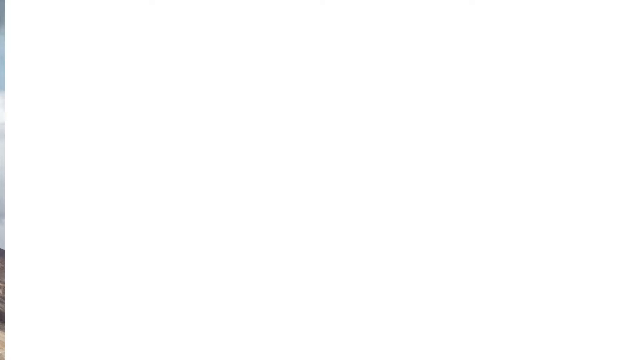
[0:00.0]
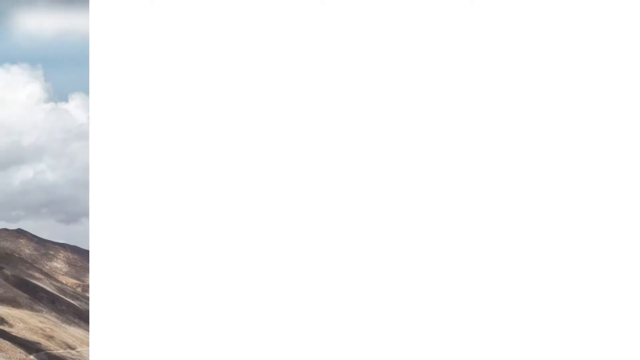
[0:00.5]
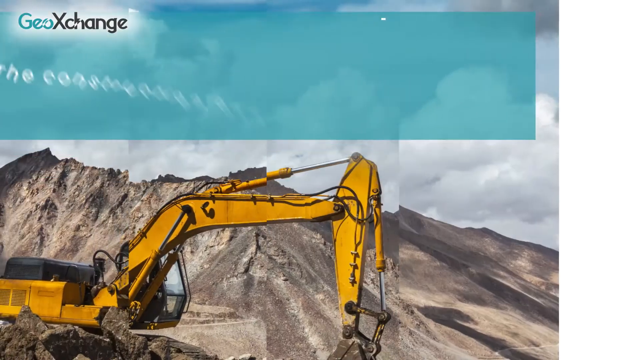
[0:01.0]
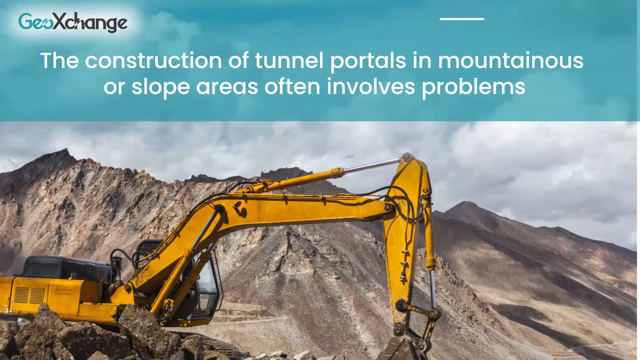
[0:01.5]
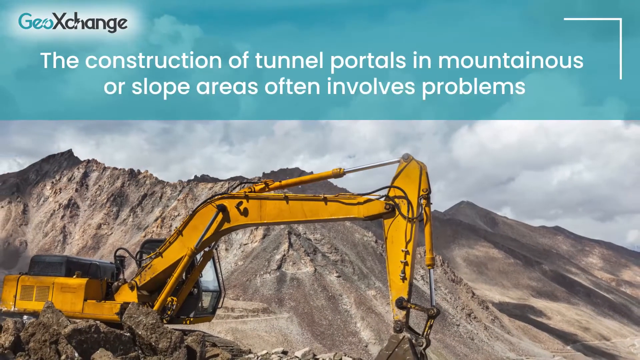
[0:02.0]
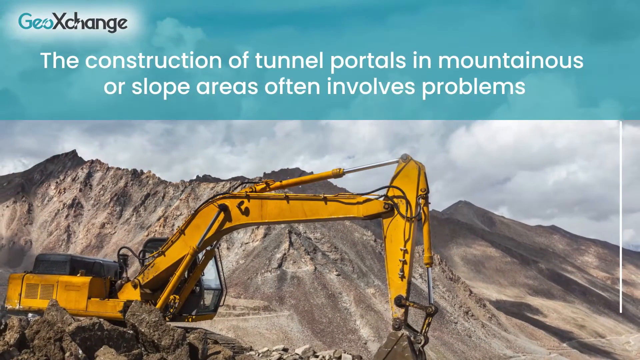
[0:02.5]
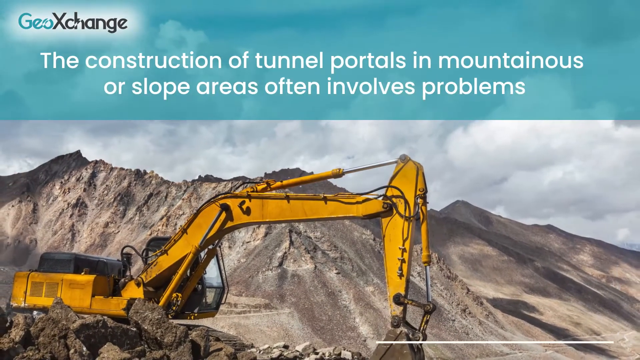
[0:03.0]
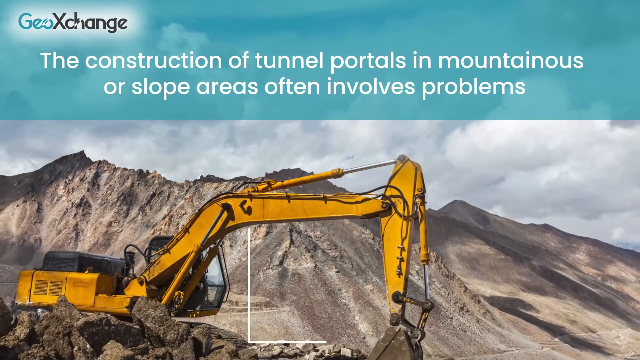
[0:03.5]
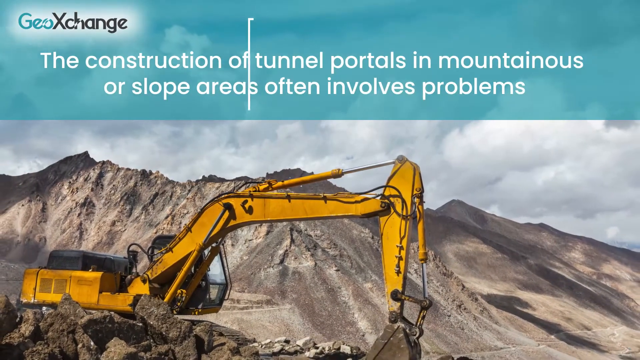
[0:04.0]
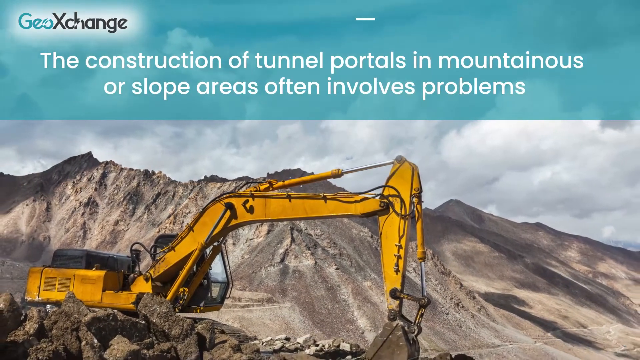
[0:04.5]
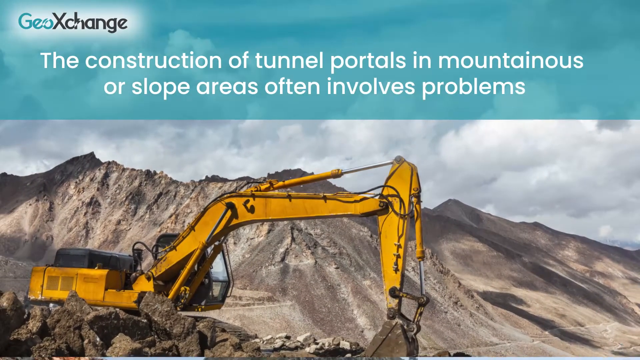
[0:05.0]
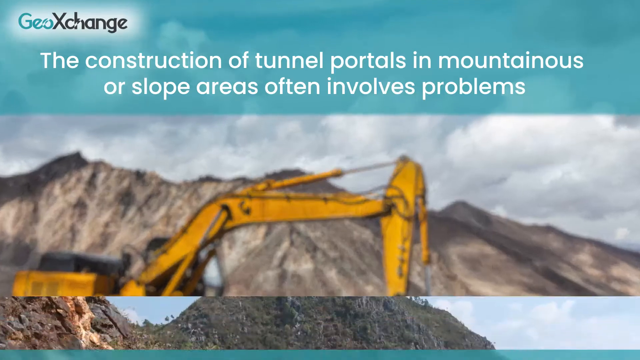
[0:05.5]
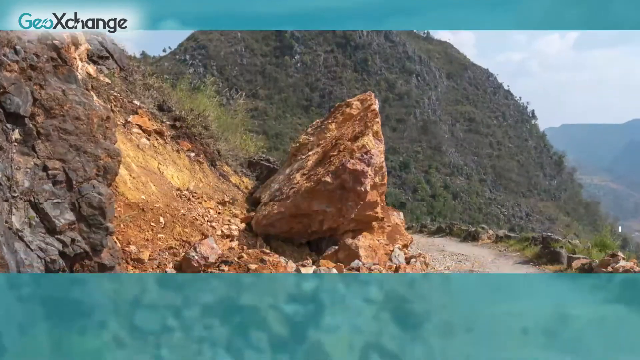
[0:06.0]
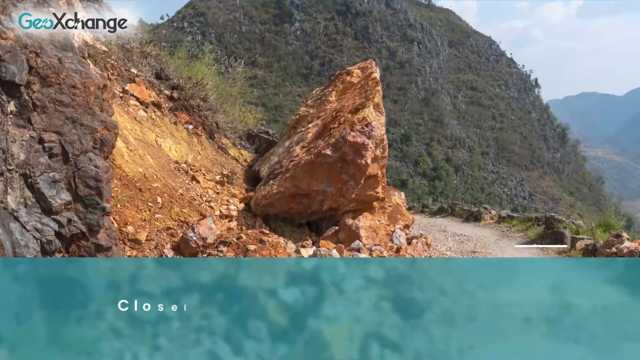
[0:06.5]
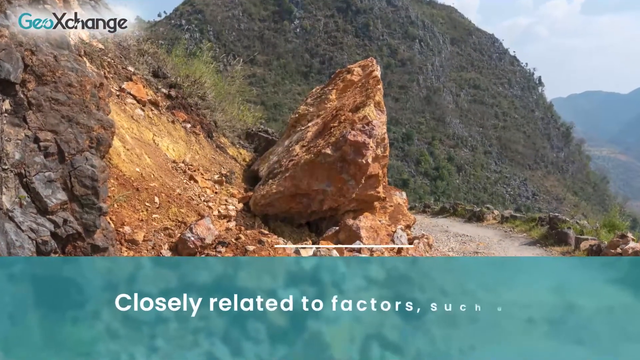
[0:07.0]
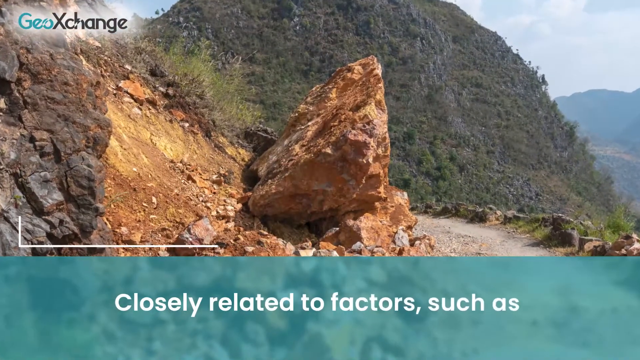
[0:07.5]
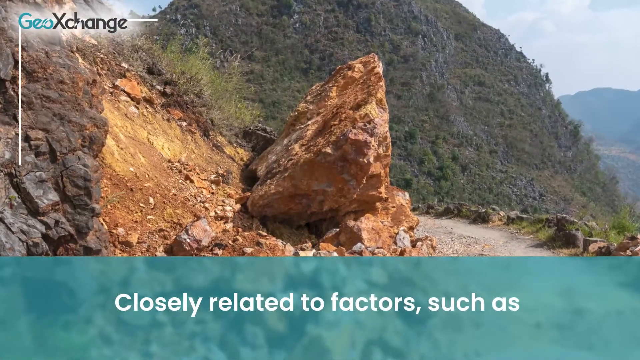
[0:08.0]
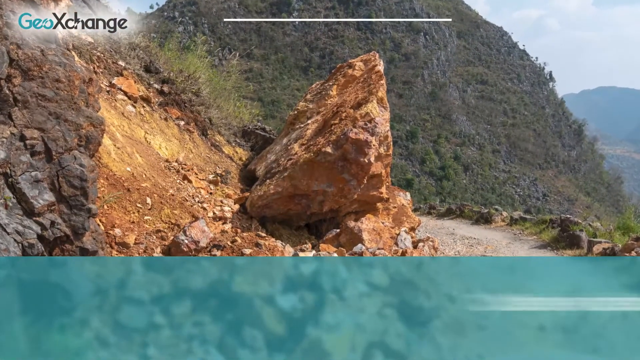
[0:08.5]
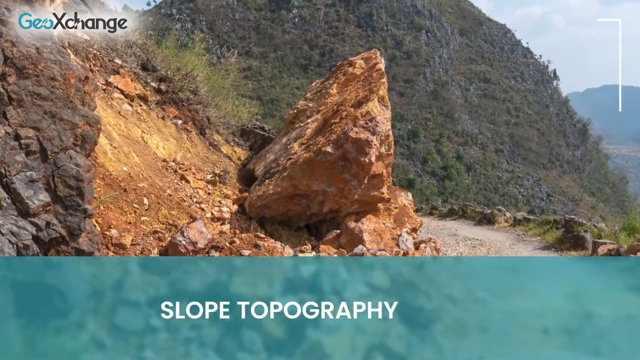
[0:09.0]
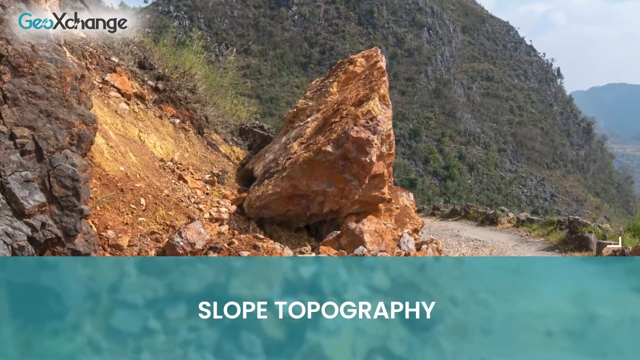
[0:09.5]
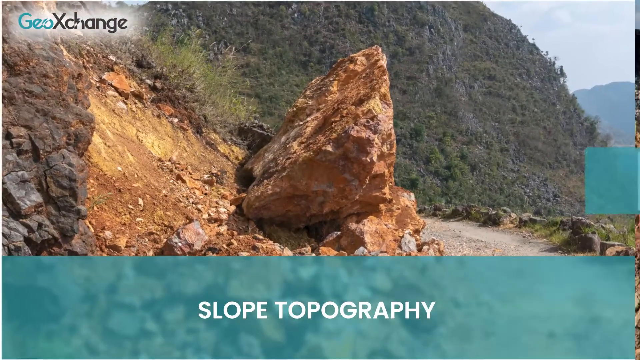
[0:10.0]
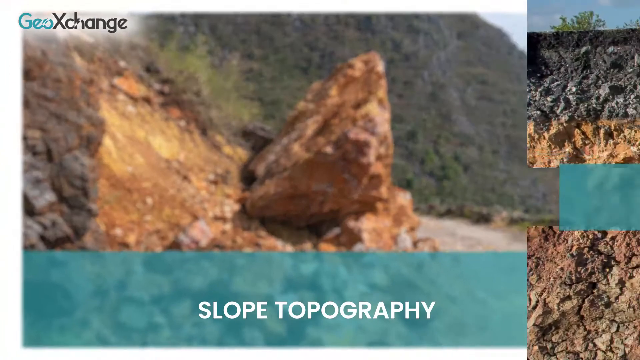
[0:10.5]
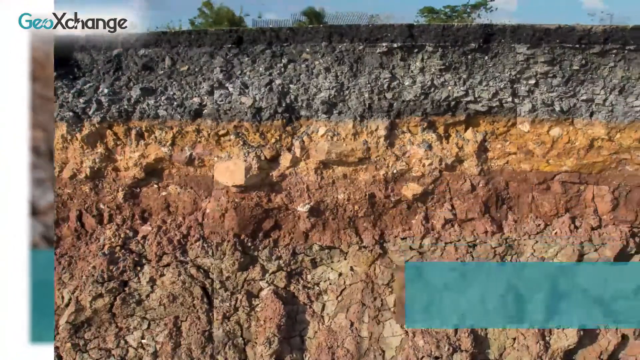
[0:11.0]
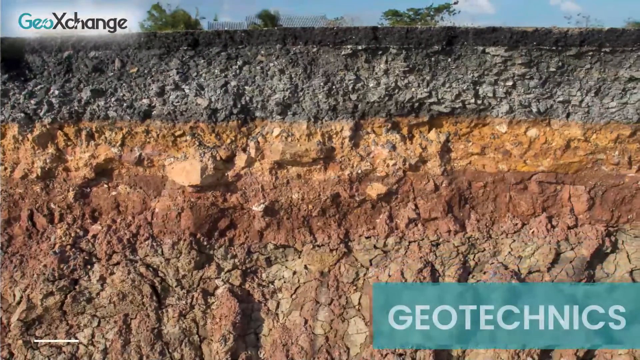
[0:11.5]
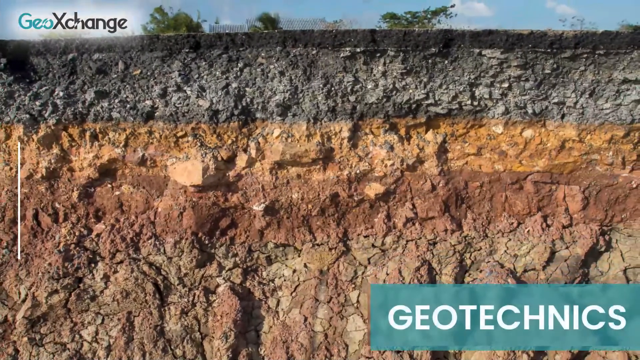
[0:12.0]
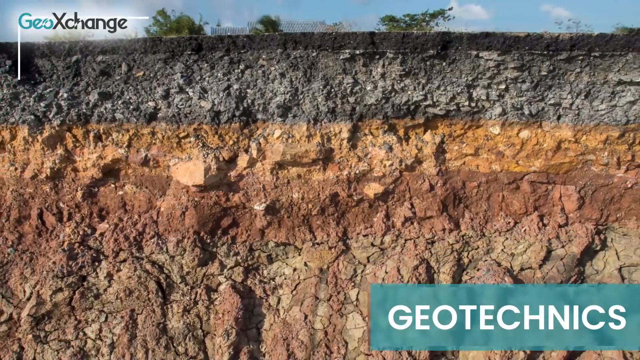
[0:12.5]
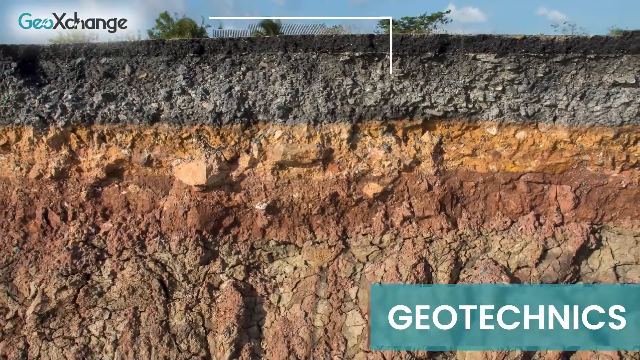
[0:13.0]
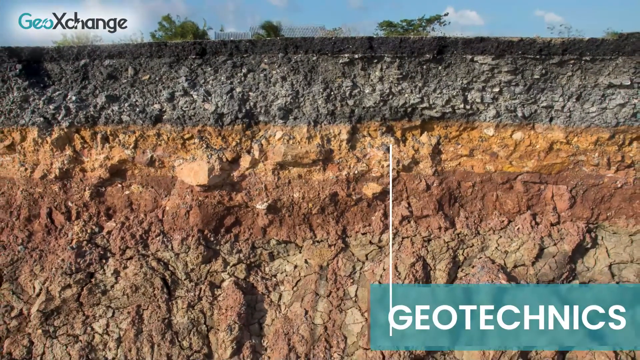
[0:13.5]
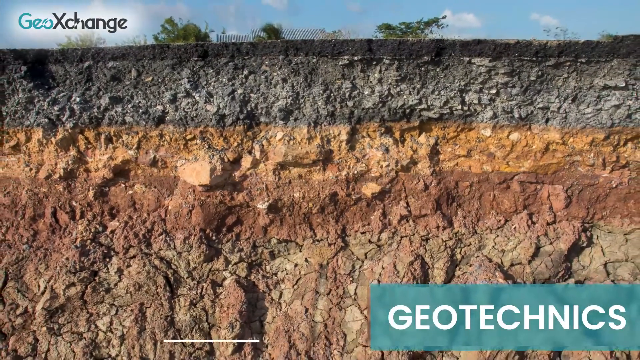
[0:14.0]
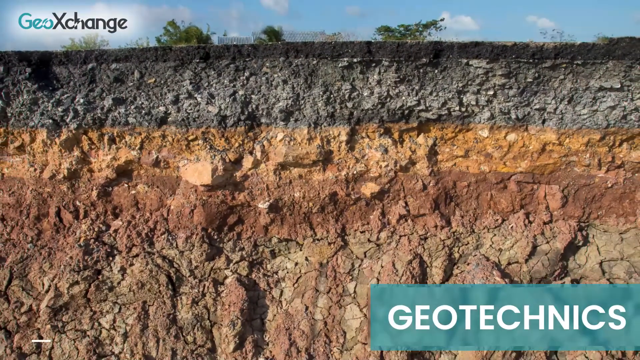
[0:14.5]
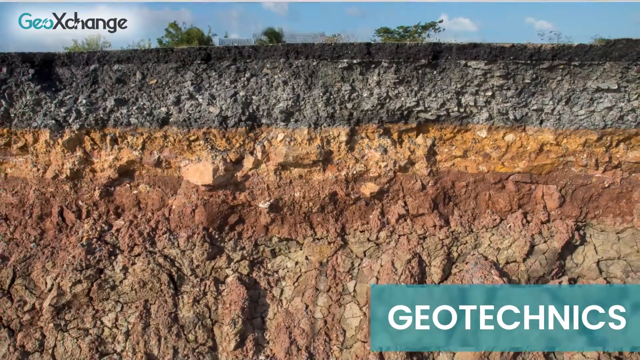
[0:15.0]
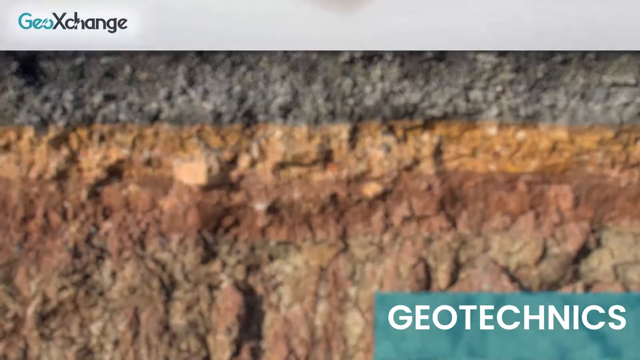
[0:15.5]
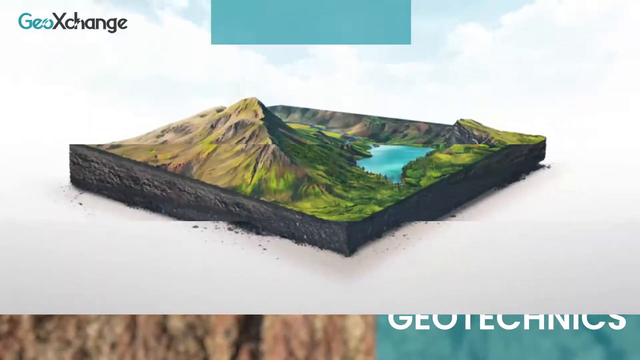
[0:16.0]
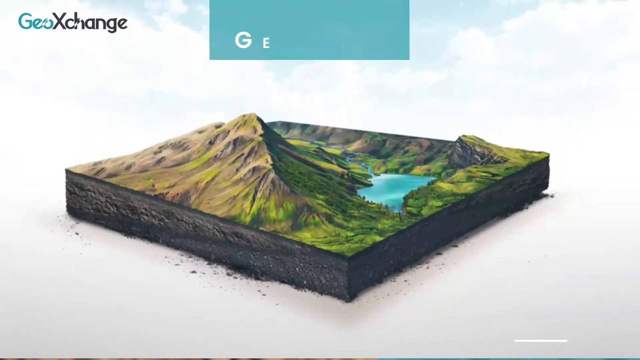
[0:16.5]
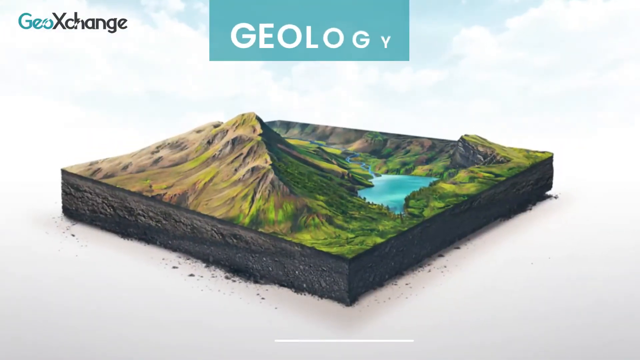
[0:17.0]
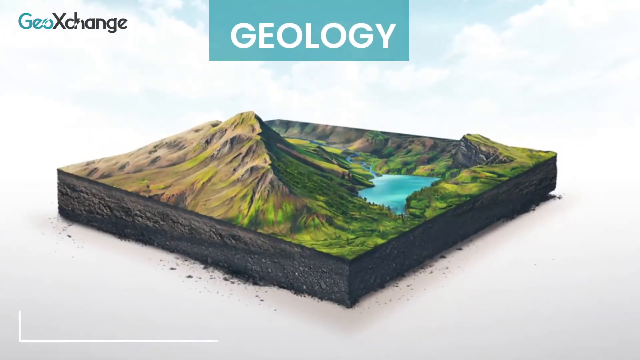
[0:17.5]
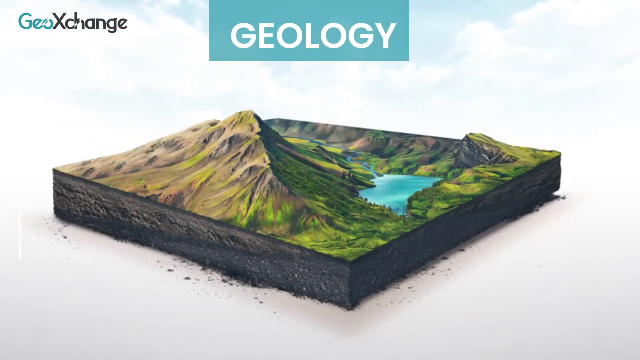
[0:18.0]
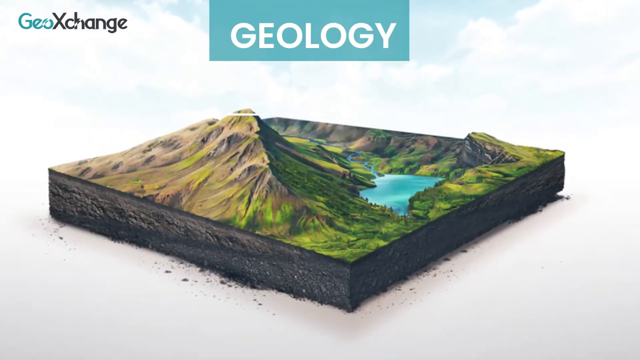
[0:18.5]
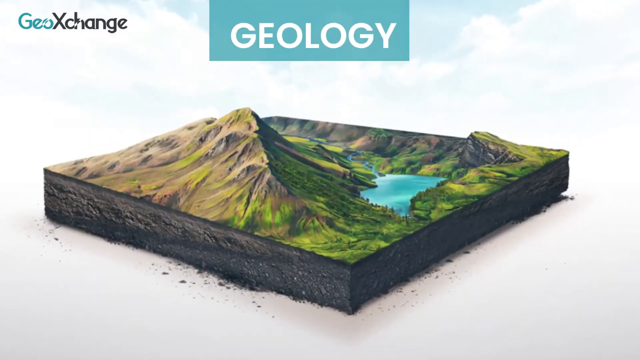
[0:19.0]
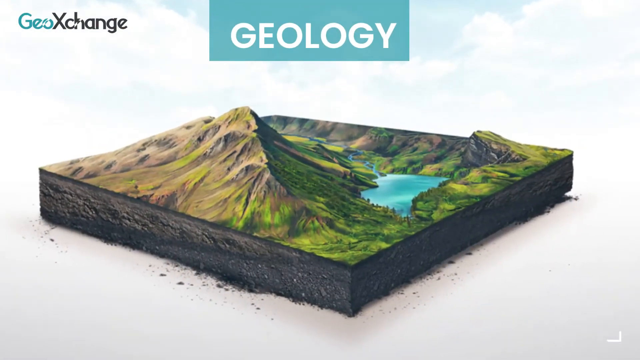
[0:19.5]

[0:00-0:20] This educational video describes the problems that occur in the construction of tunnel portals in mountainous or slope areas. It opens with a statement reading "the construction of tunnel portals in mountainous or slope areas often involves problems" over an image of a big digger in front of a mountain. The slide transitions to another image with text reading "closely related to factors such as", and the image shows a very large rock that seems to have separated from the mountain and could easily fall. Next the term "slope topography" appears. Then comes "geotechnics", with an image of the layers of soil: about five different layers, namely the surface level, a grey layer, a yellowish light brownish one, a dark brown one, and a chunkier rock layer. The next factor is "geology", shown with a kind of large square chunk of land with a mountain and a lake in the middle.